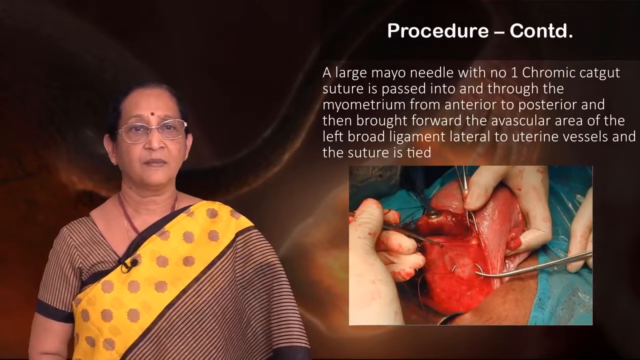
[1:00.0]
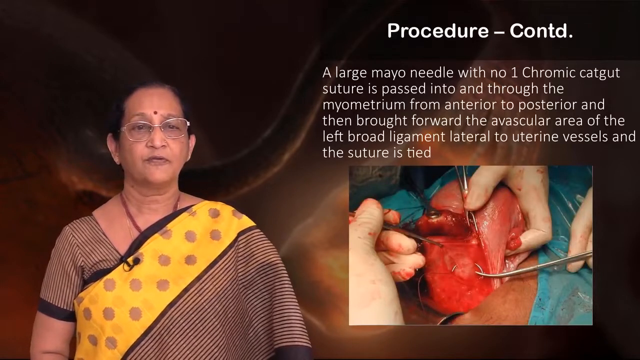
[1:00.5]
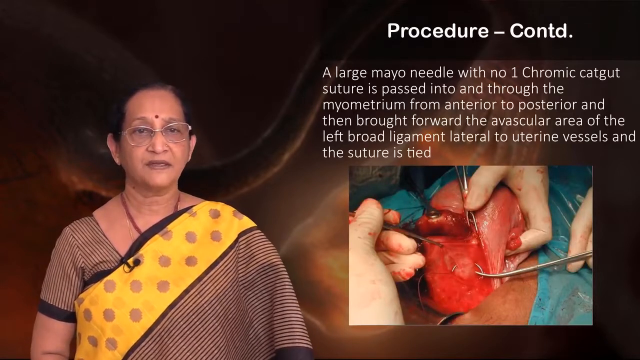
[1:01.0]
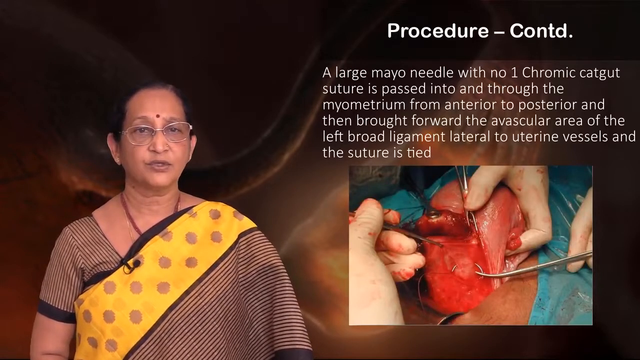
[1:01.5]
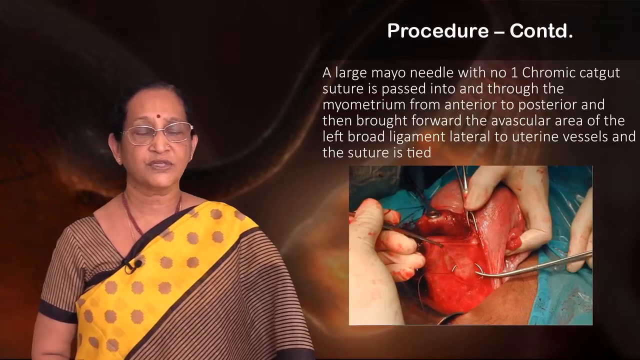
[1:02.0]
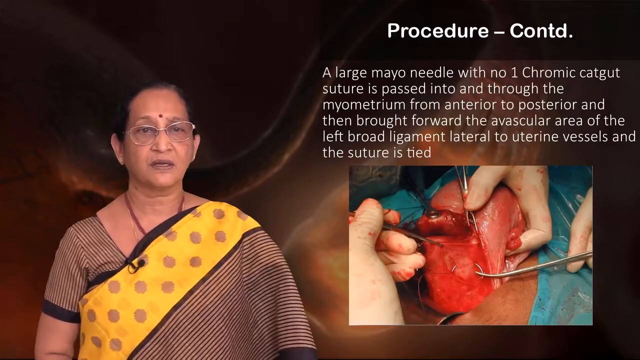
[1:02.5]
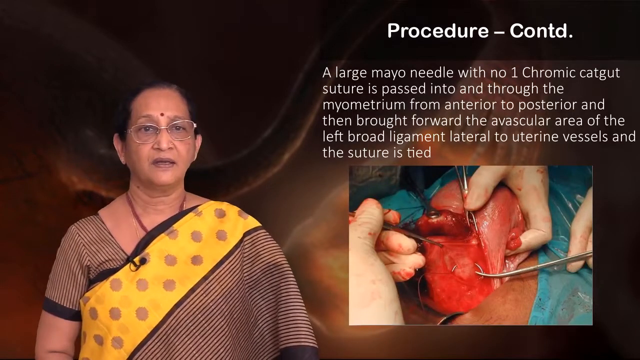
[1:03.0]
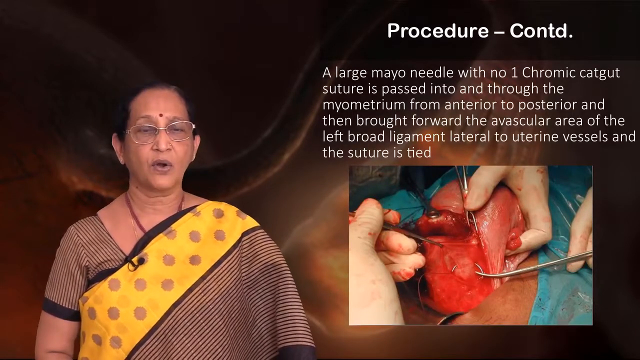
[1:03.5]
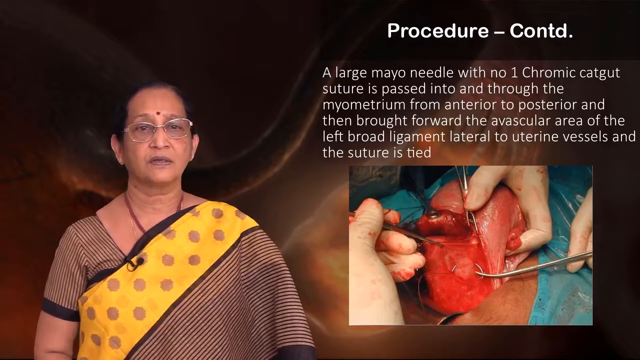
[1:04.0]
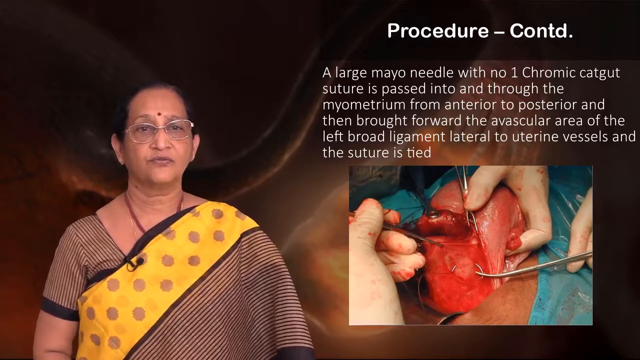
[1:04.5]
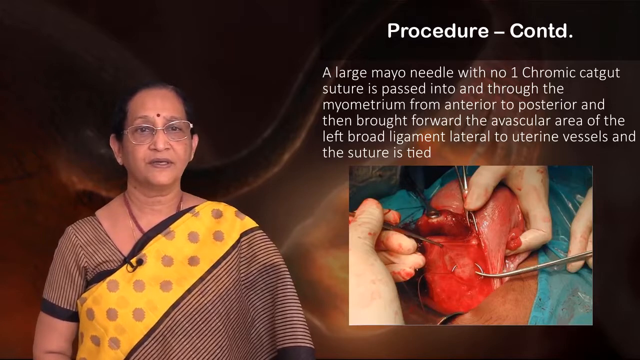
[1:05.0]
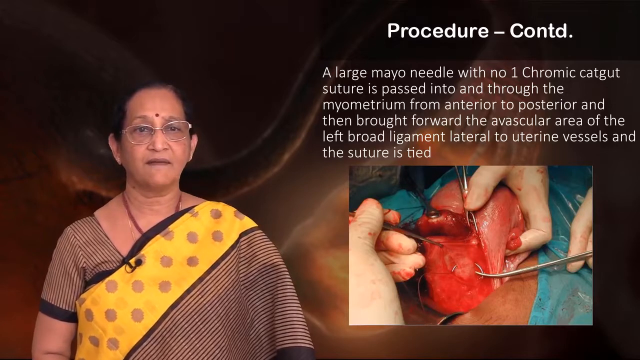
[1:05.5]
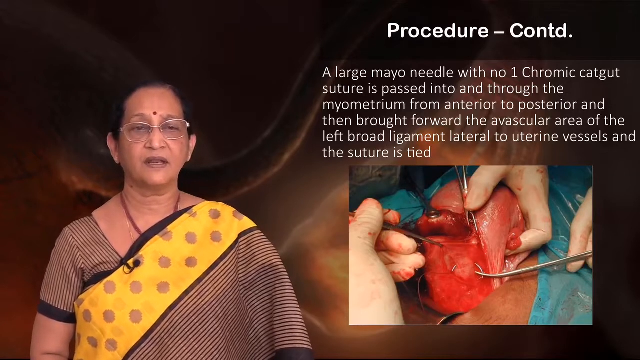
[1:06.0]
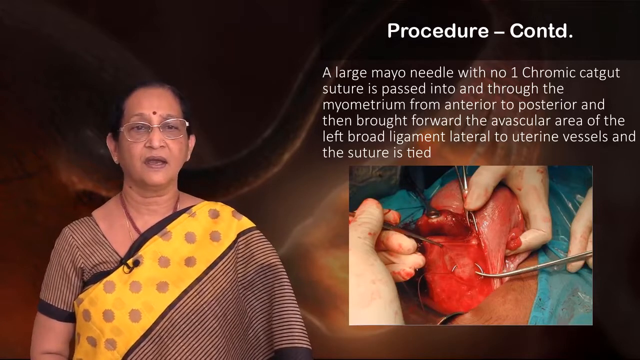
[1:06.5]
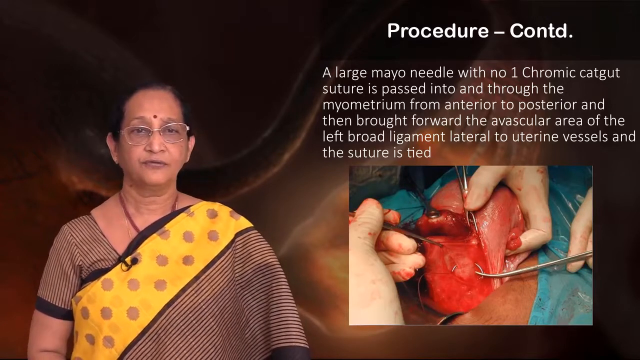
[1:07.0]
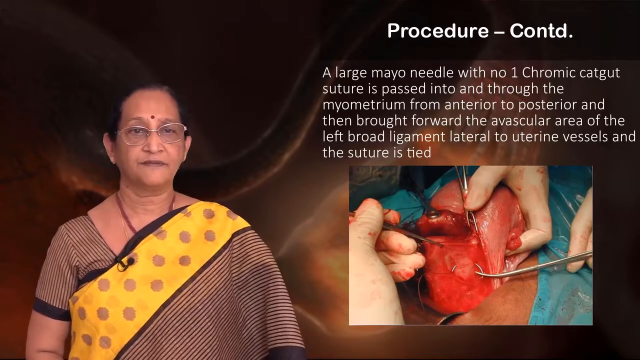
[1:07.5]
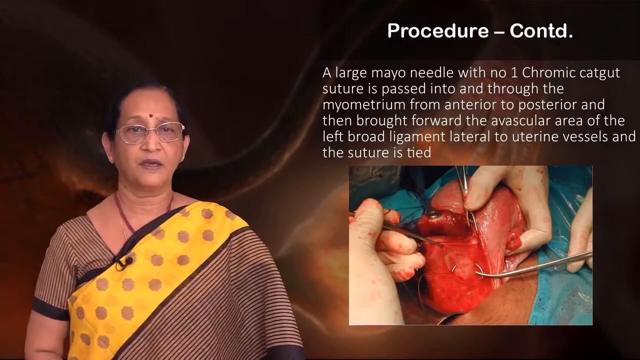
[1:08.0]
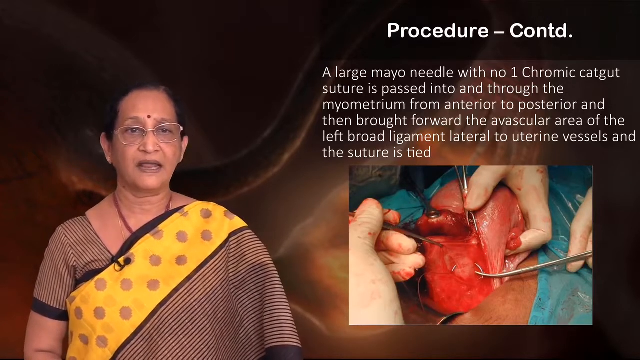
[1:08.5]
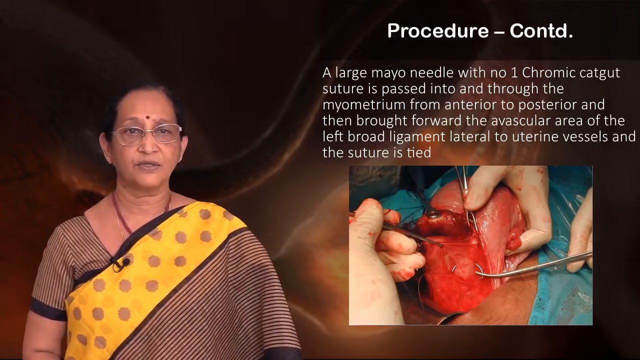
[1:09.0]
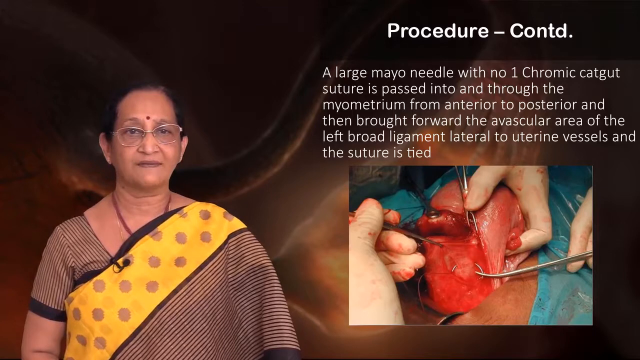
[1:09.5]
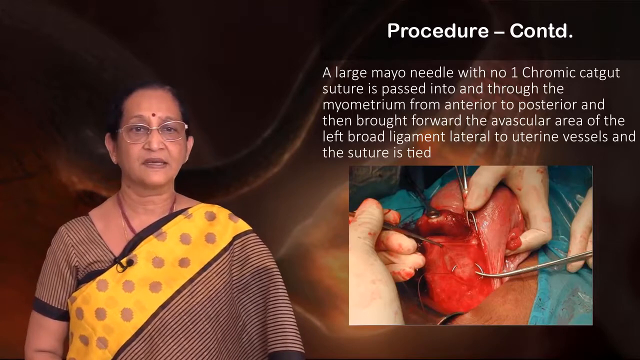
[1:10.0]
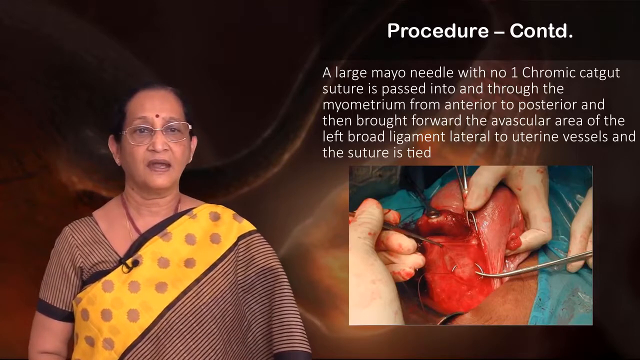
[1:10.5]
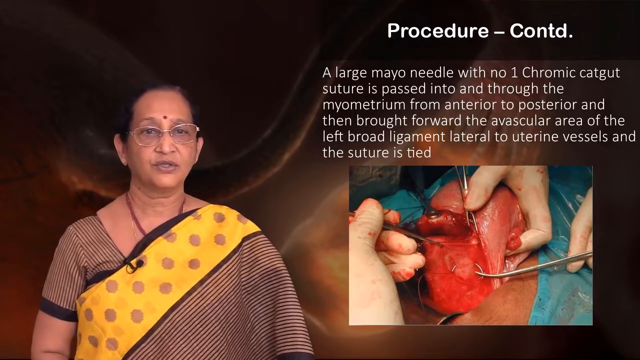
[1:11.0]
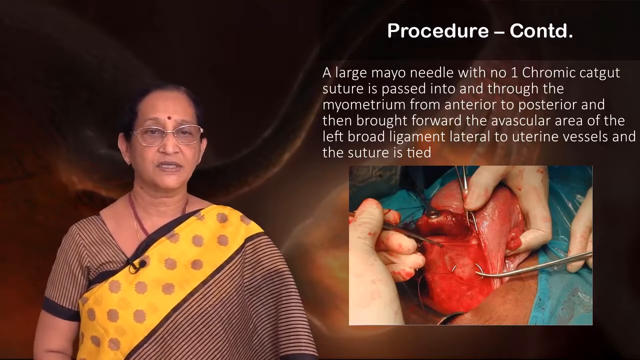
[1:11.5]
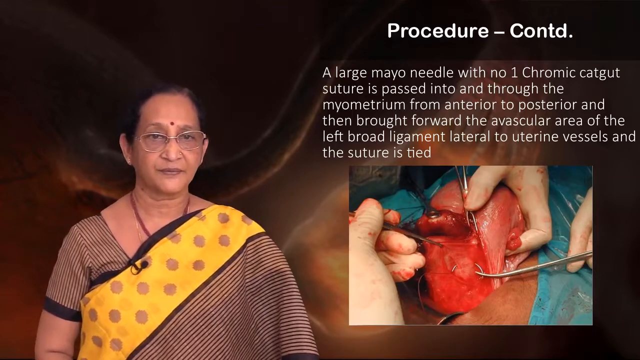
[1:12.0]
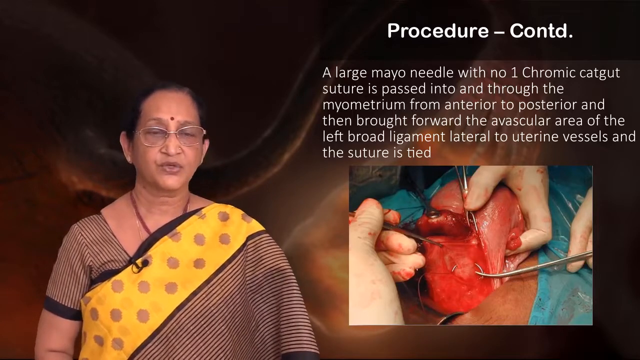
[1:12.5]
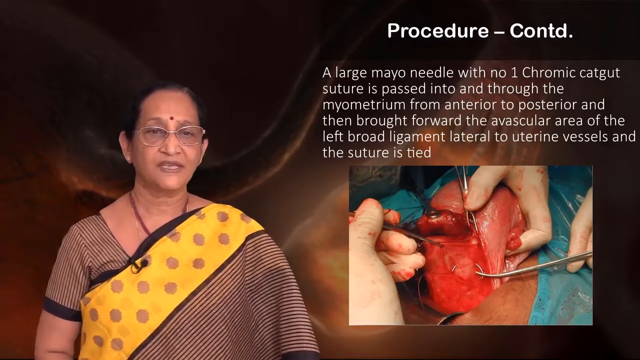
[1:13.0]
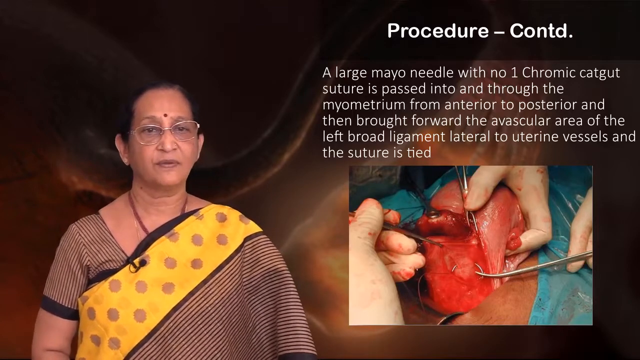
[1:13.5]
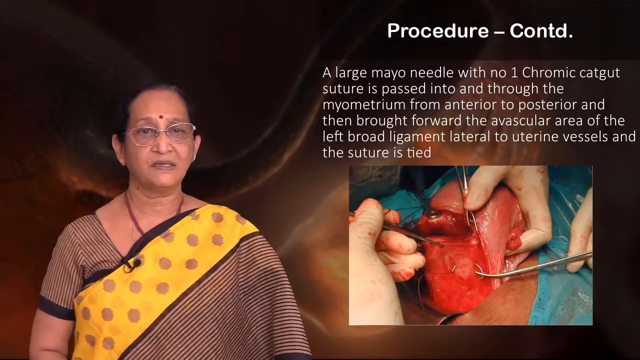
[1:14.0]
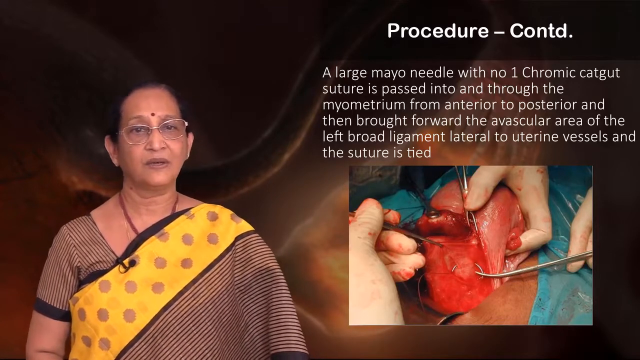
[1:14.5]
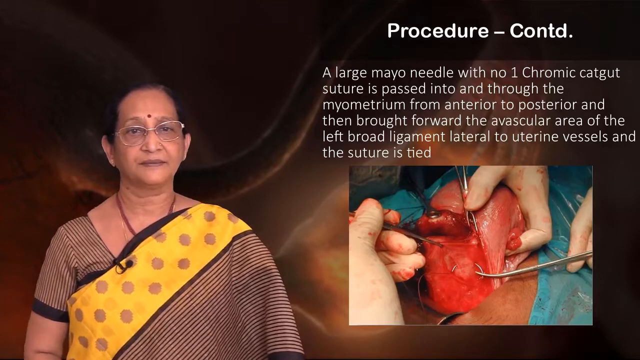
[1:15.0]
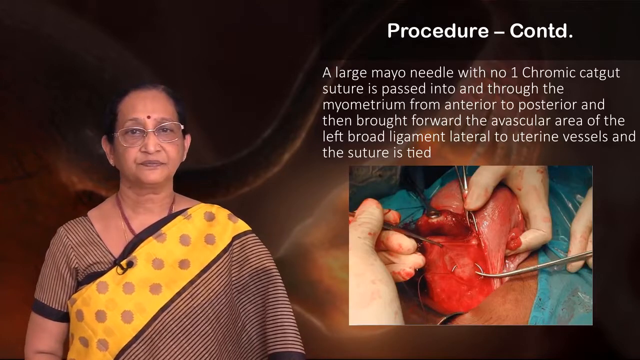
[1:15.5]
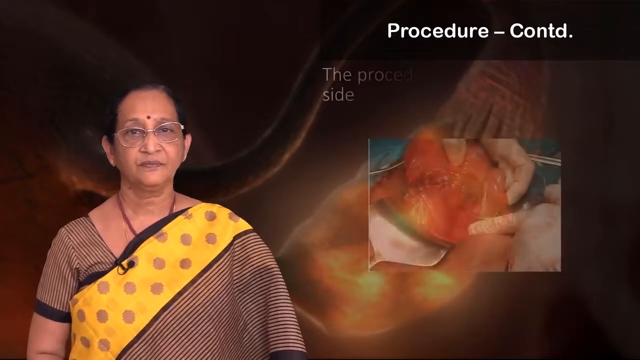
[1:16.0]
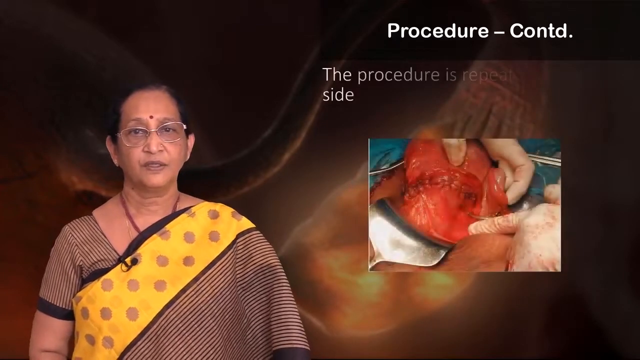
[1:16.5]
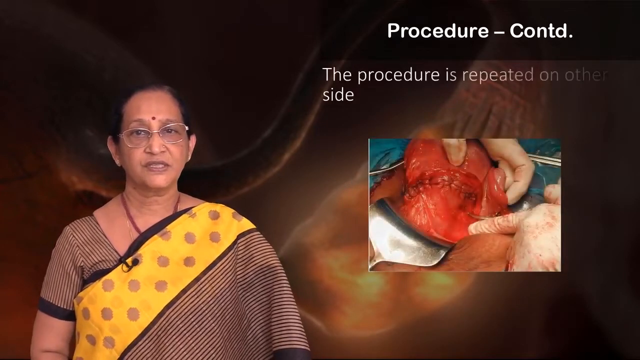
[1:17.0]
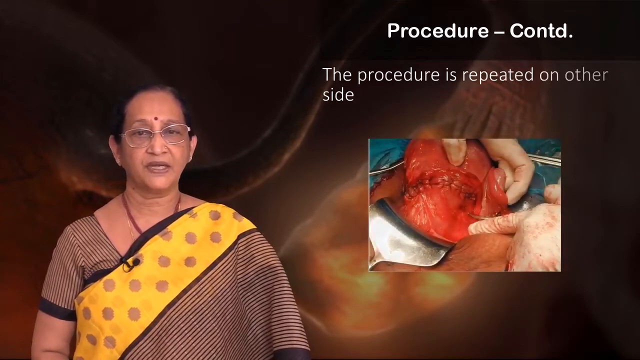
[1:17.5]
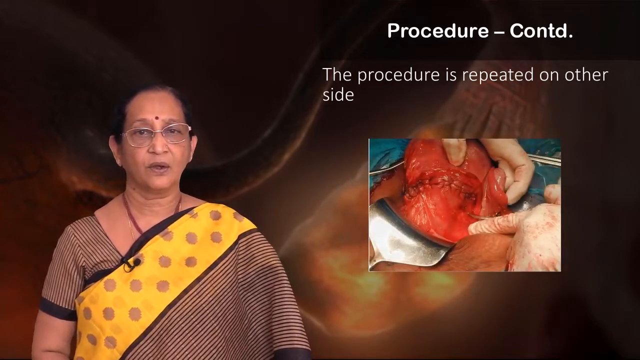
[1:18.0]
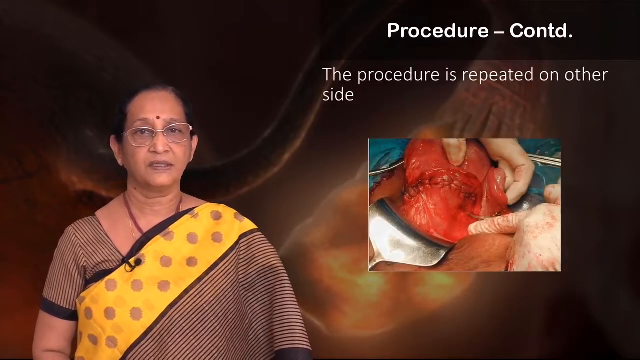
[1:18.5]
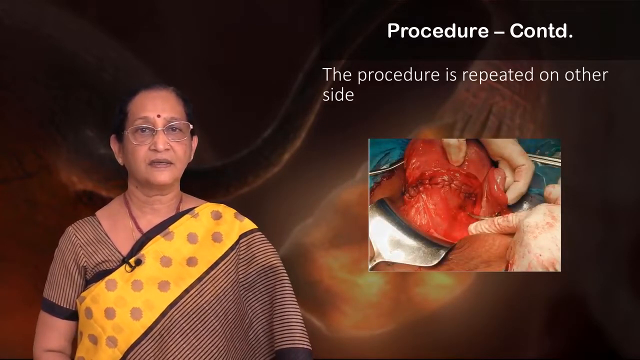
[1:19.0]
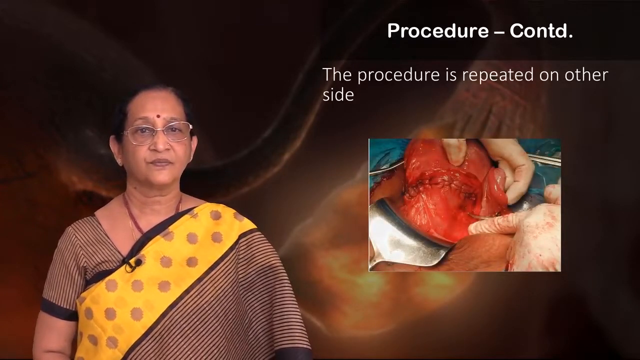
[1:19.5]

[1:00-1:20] The woman continues to speak neutrally, not very emotionally, as the same slide remains for about half of the shot. Eventually a new slide appears on the right side; the title at the top right stays the same, "procedure - CONTD", but the text underneath changes to a simple sentence reading "the procedure is repeated on other side". Beneath it is another picture of medical-gloved hands grabbing something inside a body, in what looks to be a very risky surgery involving cutting and sutures.